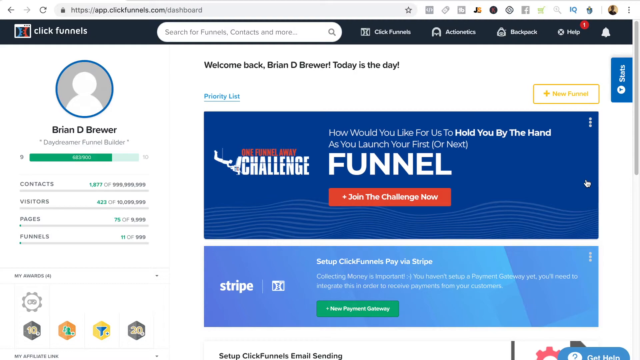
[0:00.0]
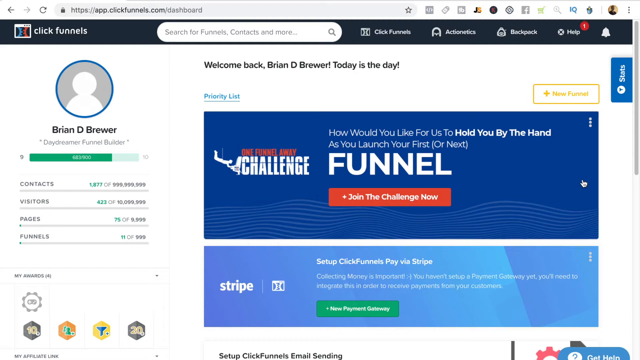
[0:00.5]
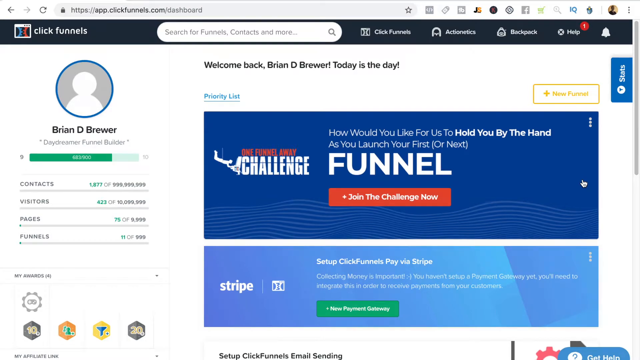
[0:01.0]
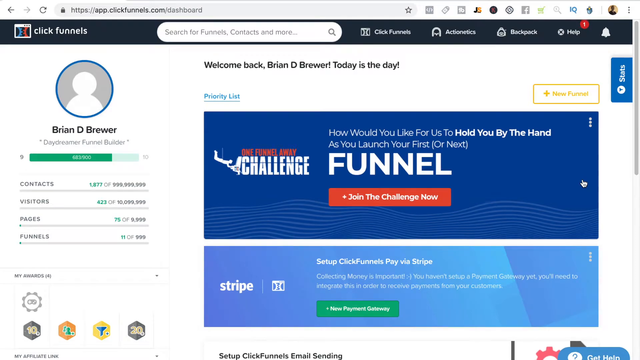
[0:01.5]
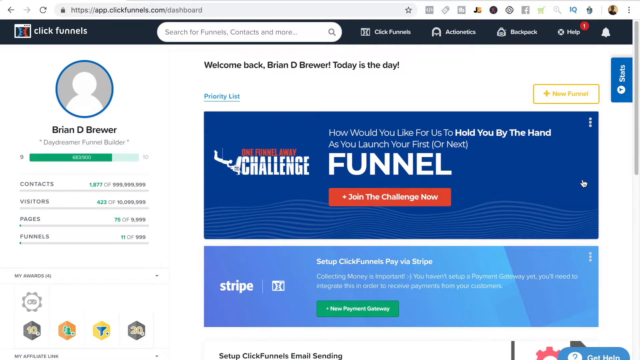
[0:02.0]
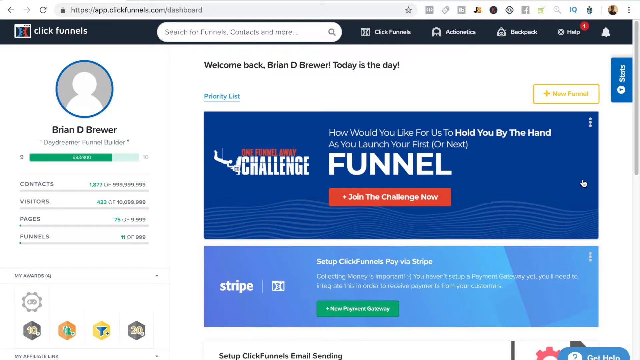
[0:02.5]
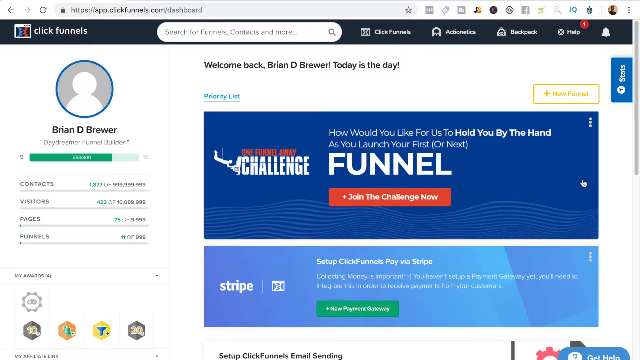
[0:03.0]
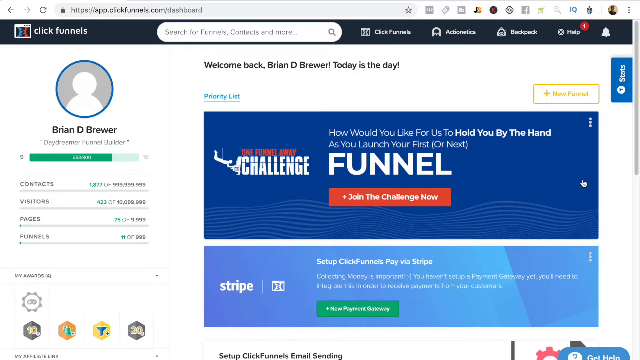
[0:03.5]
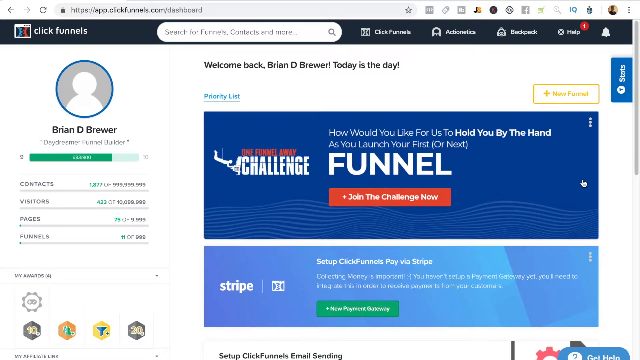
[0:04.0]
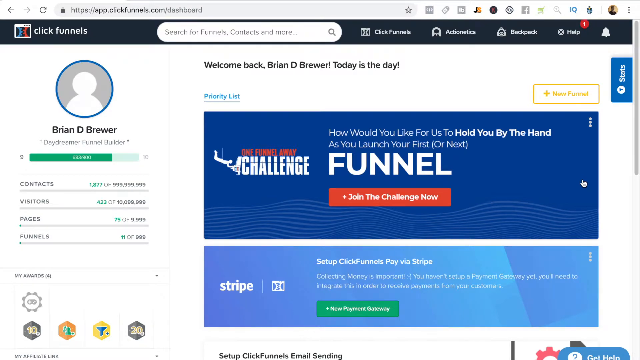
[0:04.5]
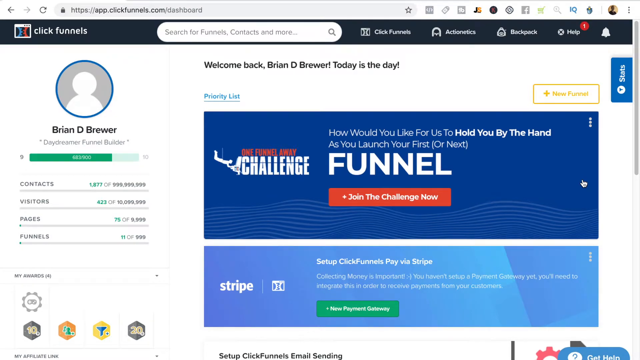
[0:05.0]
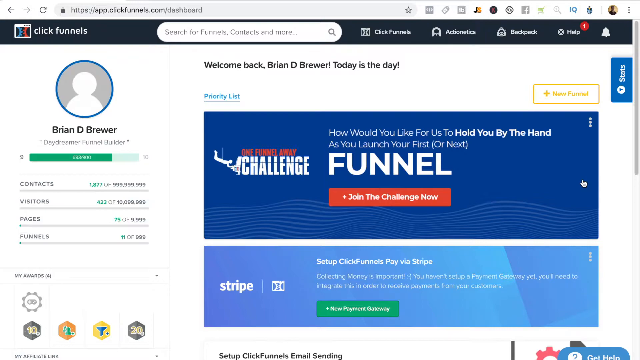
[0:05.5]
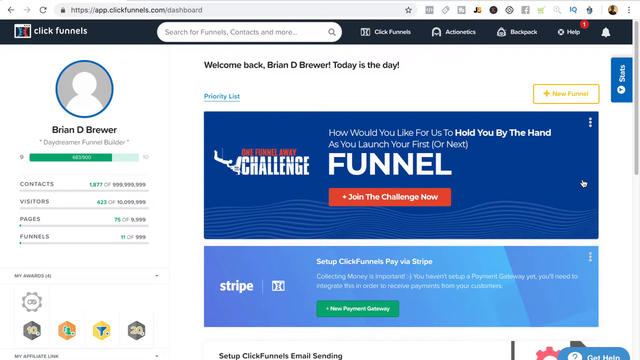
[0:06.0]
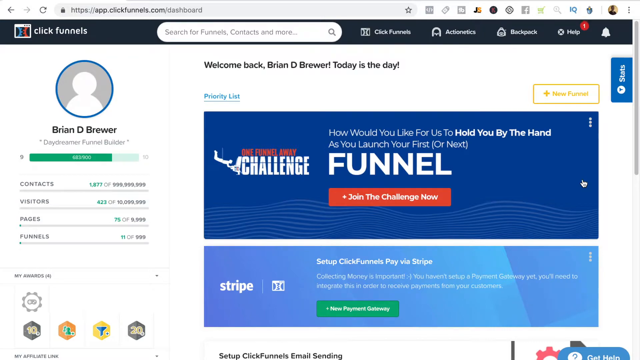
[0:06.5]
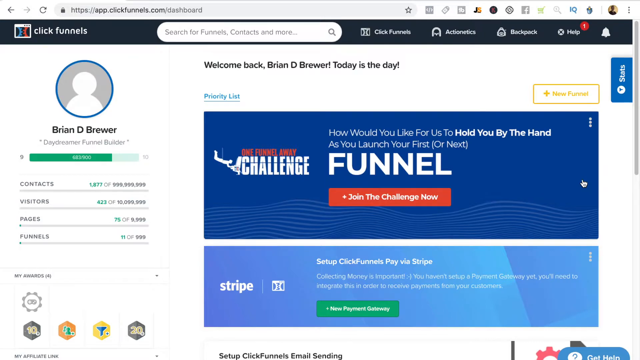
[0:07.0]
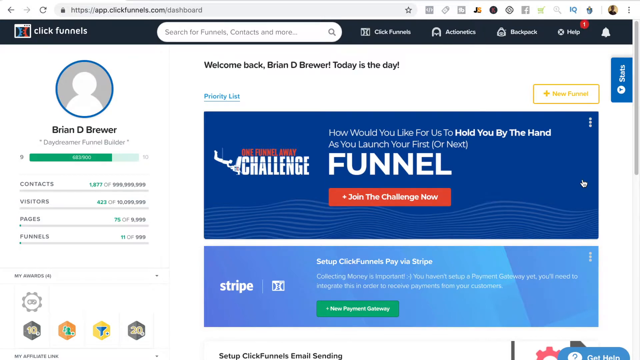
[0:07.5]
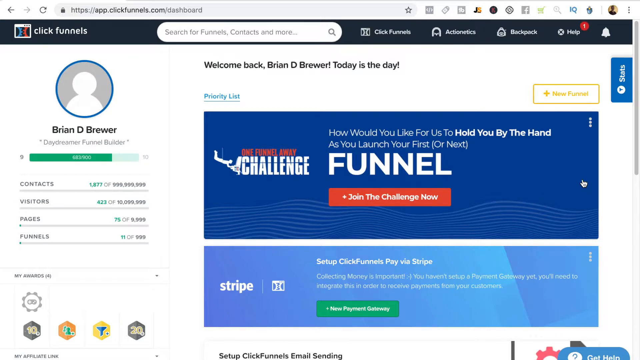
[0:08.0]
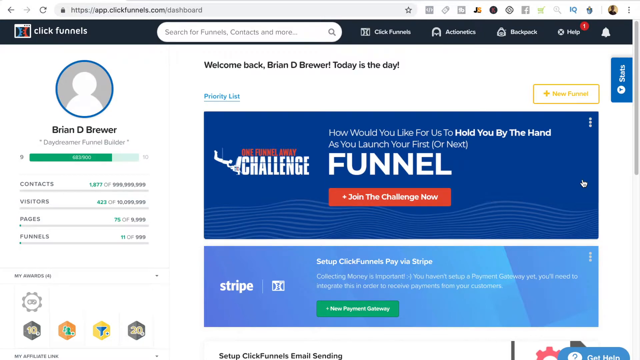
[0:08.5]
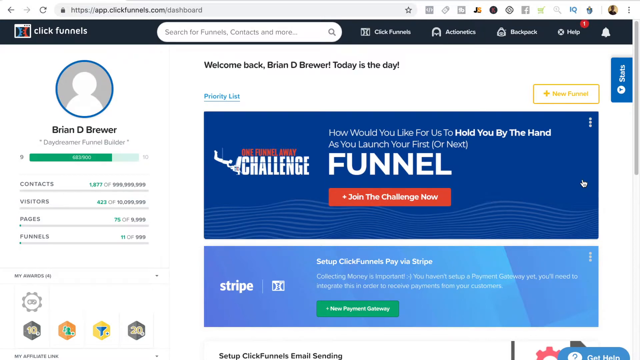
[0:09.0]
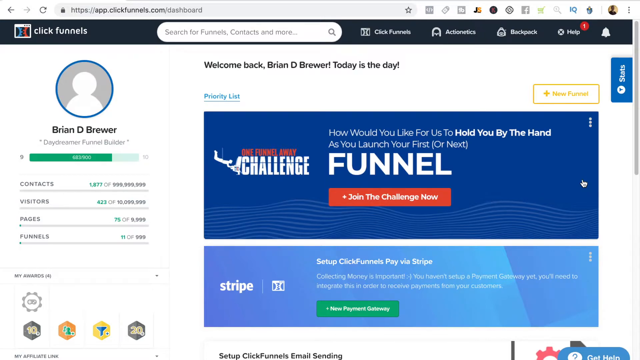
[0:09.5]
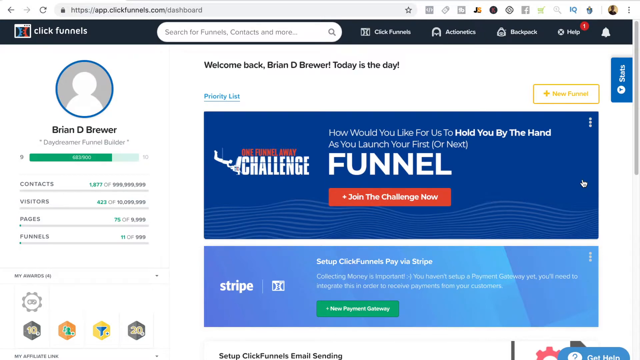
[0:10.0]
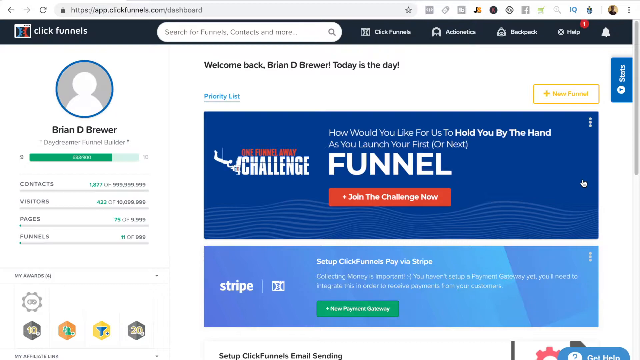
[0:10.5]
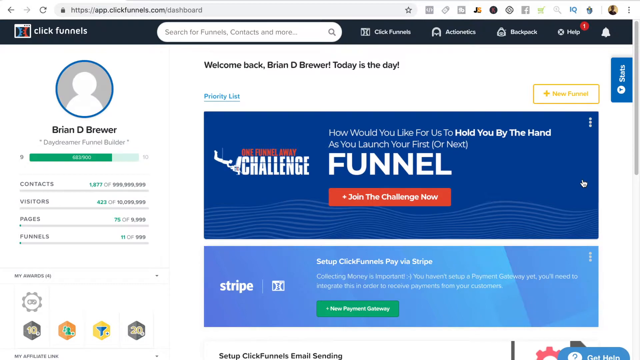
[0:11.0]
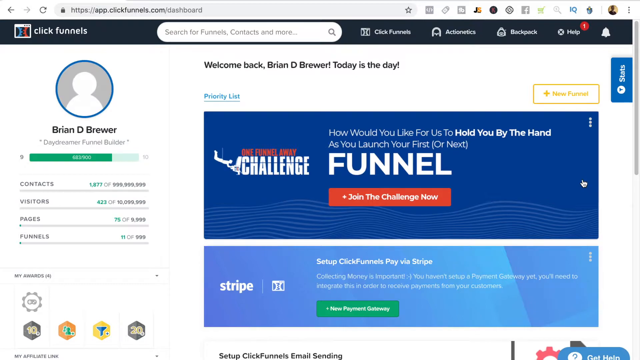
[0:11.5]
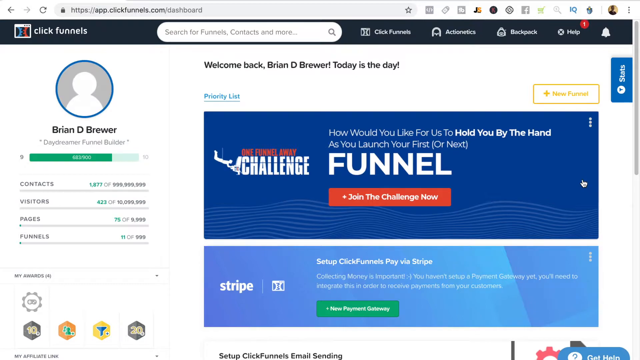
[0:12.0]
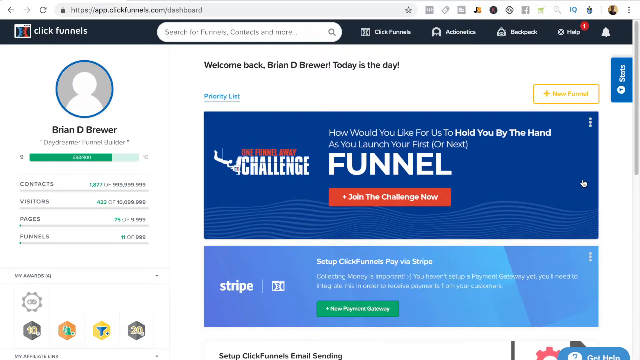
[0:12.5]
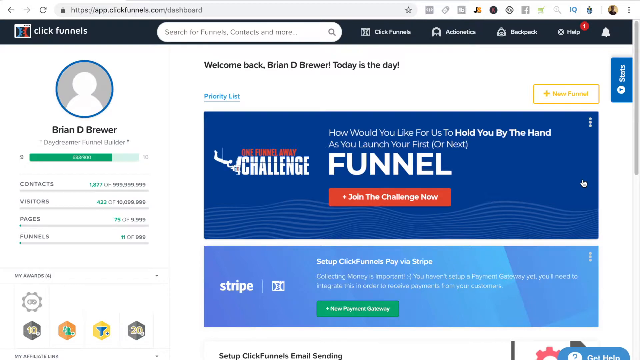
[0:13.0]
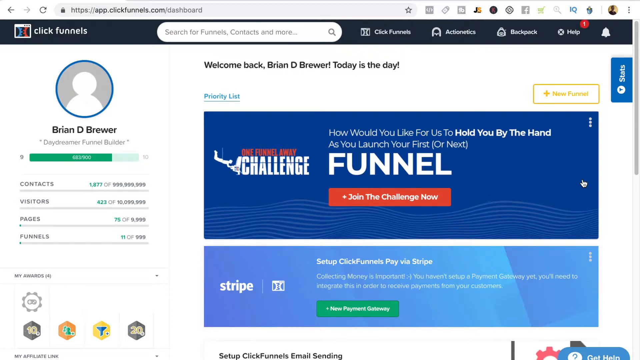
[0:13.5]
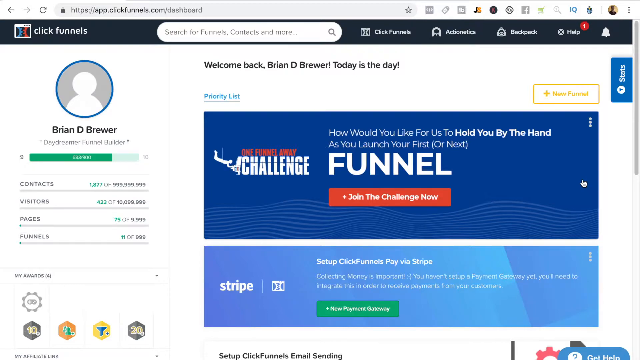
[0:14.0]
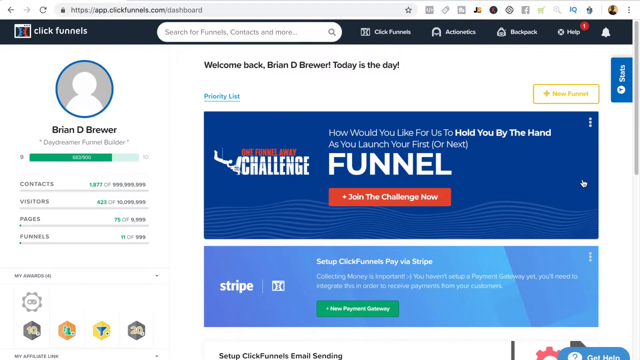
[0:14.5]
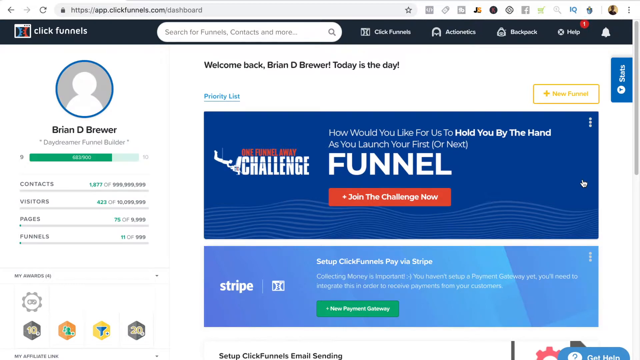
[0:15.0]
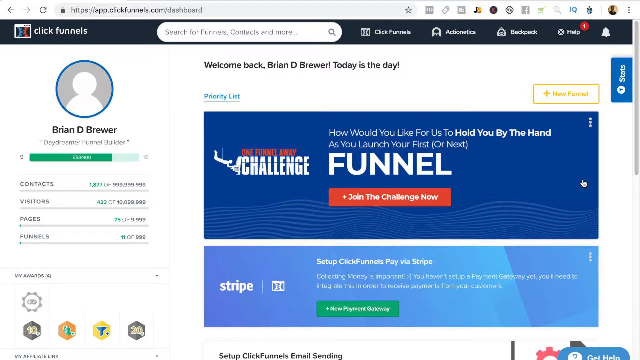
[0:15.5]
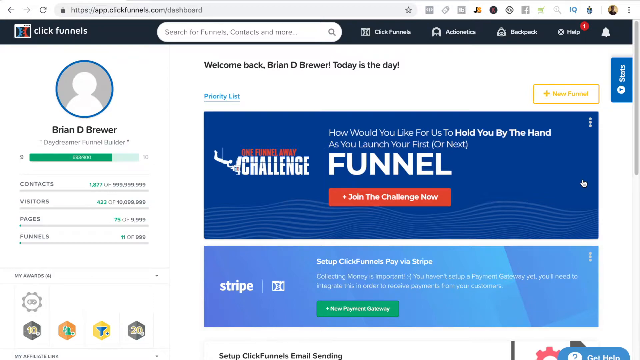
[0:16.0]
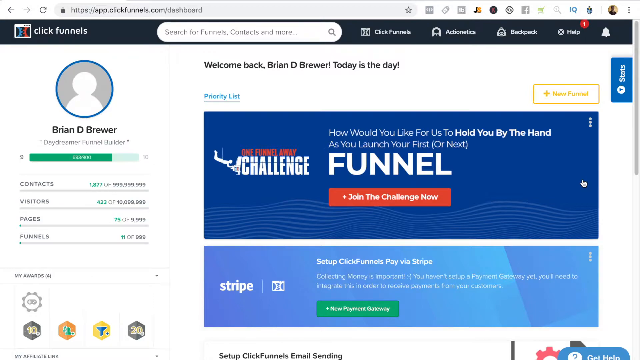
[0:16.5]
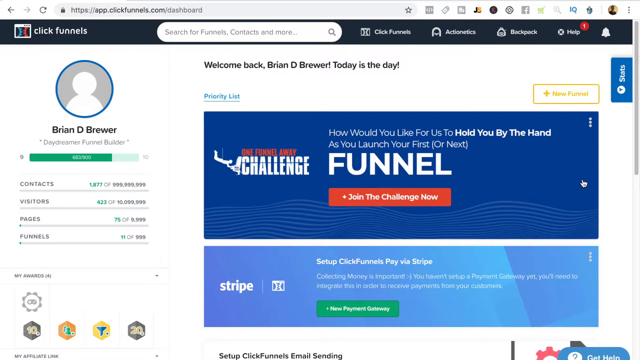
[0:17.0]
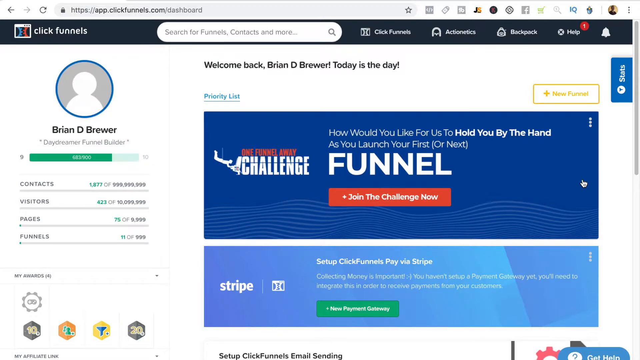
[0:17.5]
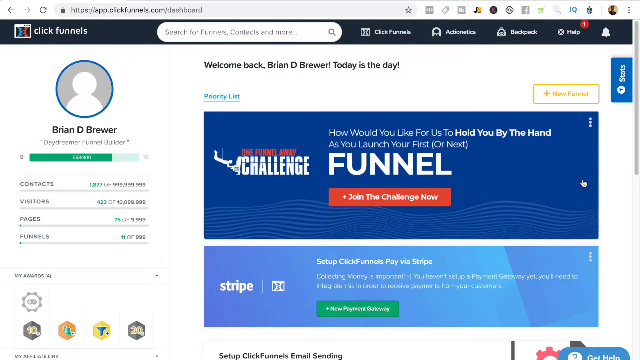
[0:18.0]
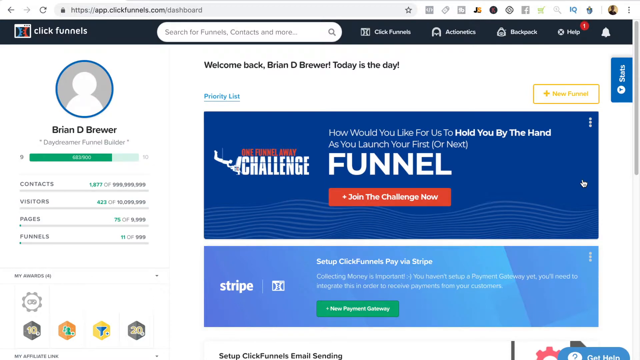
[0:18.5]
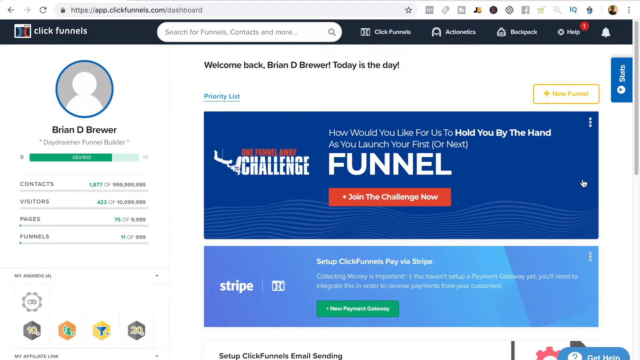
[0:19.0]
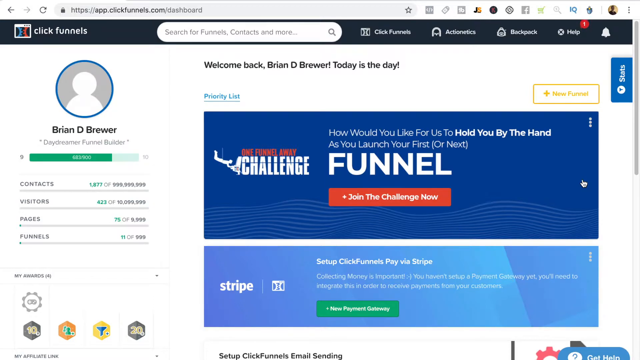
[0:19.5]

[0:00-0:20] The video opens on the home page at https://app.clickfunnels.com/dashboard. A black banner runs across the top of the page; on the right-hand side it says "ClickFunnels" in white font, and in the middle of the banner there is a search bar. Continuing to the right are menu items reading "ClickFunnels," "Action Antics," "Backpack," and "Help." The Help item has a number one above it in a red circle, indicating a notification in that menu, and there is a notification bell on the far right of the banner. The page itself has a plain white background. On the left-hand side is a blank profile icon with just a white silhouette. The name underneath, in black font, reads "Brian D. Brewer," and under that it says "Daydreamer Funnel Builder." Below is a list with the number of contacts, visitors, pages, and funnels. Near the bottom it says "my awards" with five different icons listing awards met on the website. At the top middle it says "welcome back Brian D. Brewer today is the day." A big blue box in the middle of the screen reads in white font "how would you like for us to hold you by the hand as you launch your first or next funnel," and under it is an orange button that says "join the challenge now," also in white font. Under this deep blue box is a lighter blue box that says in white font "set up ClickFunnels pay via Stripe. Collecting money is important. You haven't set up a payment gateway yet. You'll need to integrate this in order to receive payments from your customers." Under that is a green box that says "new payment gateway" in white font. Cut off near the bottom of the page is a blue semicircle that reads "get help," also in white font.